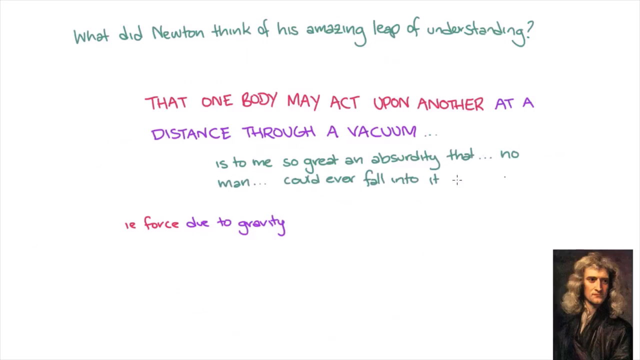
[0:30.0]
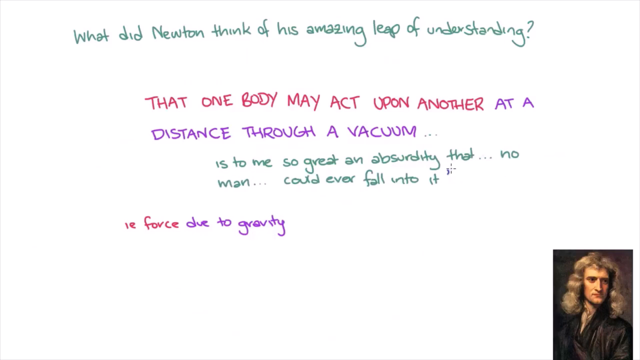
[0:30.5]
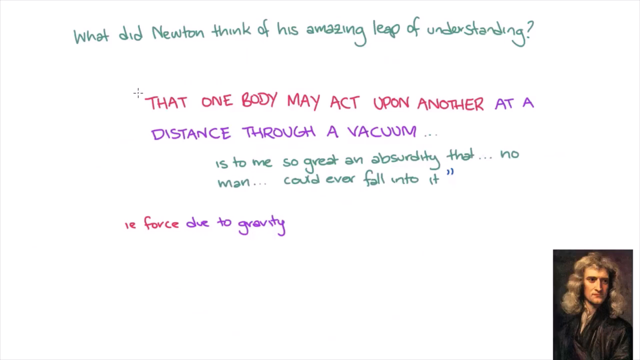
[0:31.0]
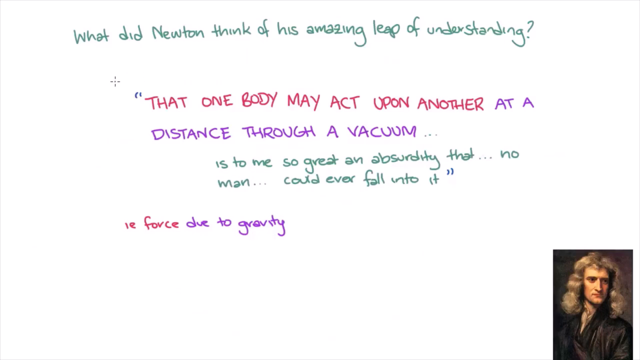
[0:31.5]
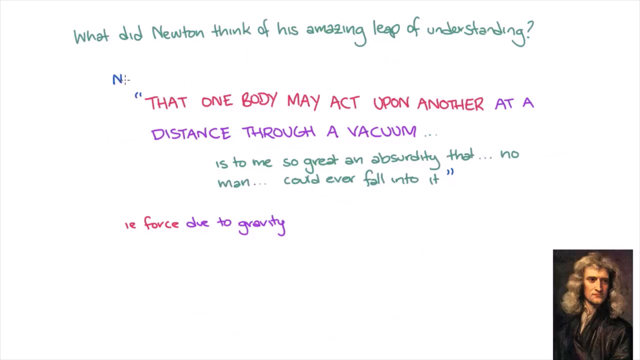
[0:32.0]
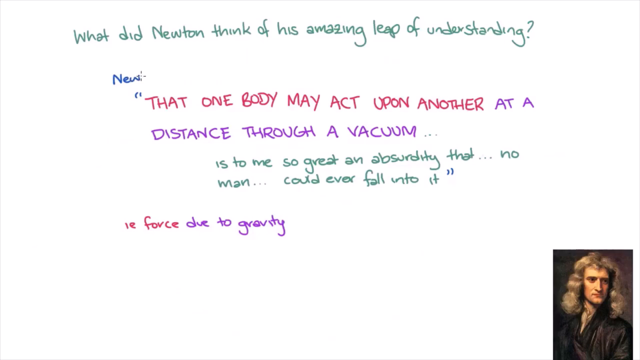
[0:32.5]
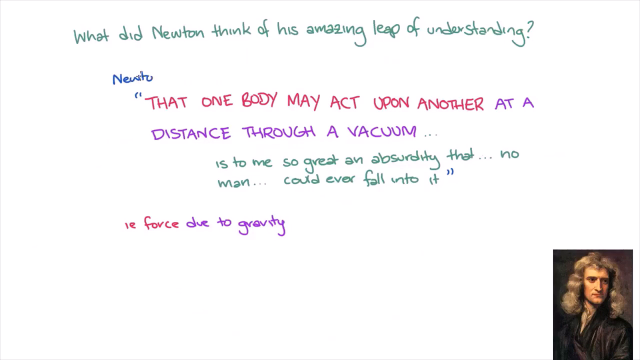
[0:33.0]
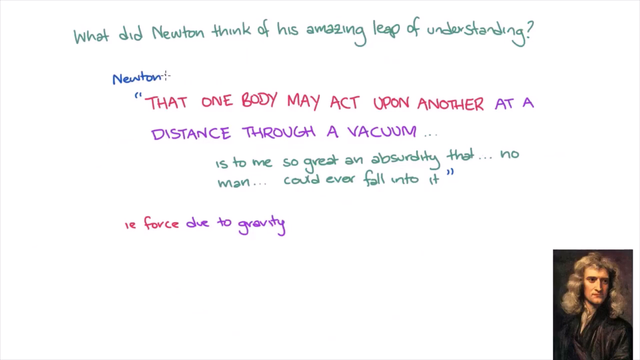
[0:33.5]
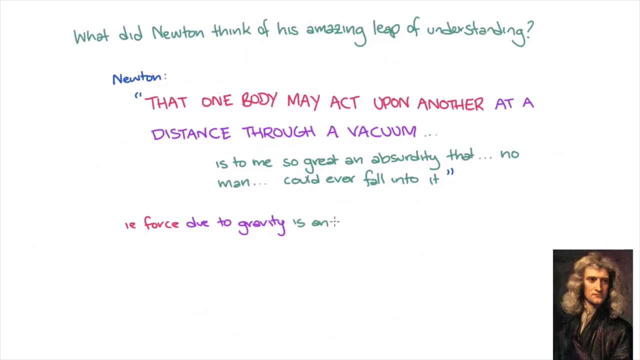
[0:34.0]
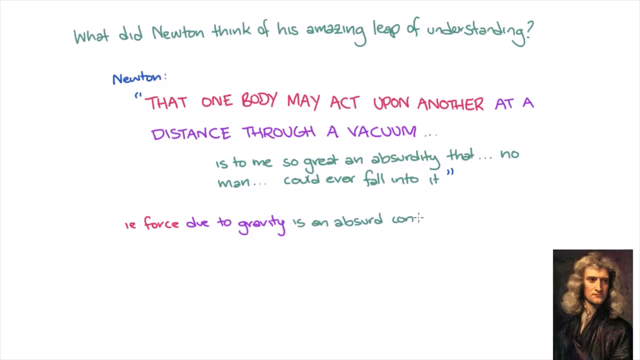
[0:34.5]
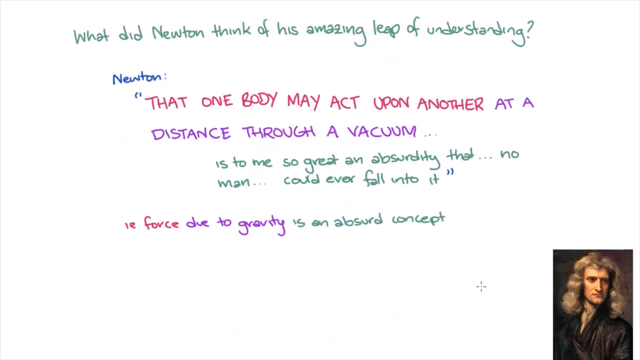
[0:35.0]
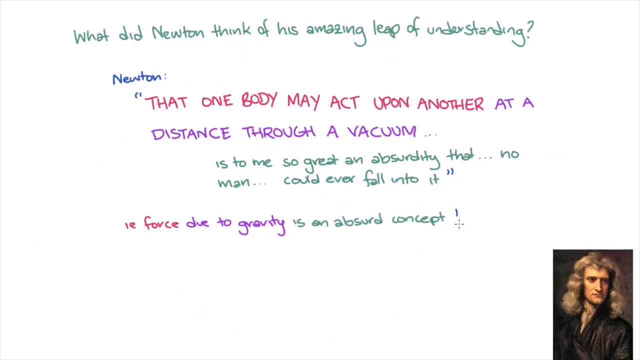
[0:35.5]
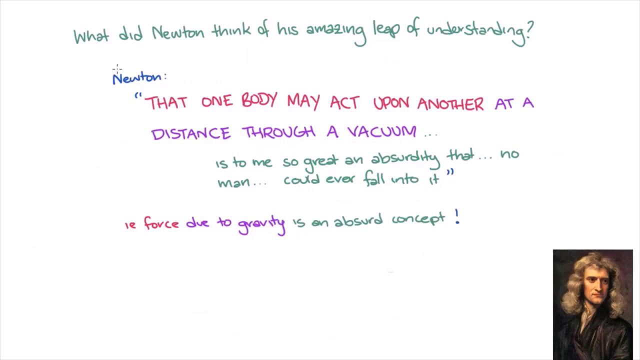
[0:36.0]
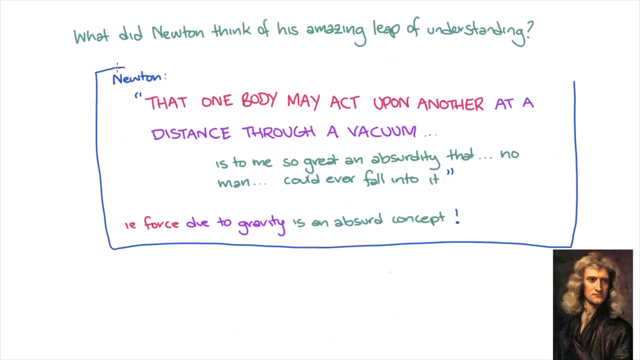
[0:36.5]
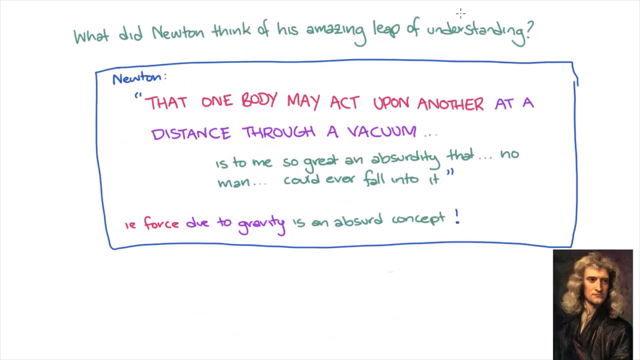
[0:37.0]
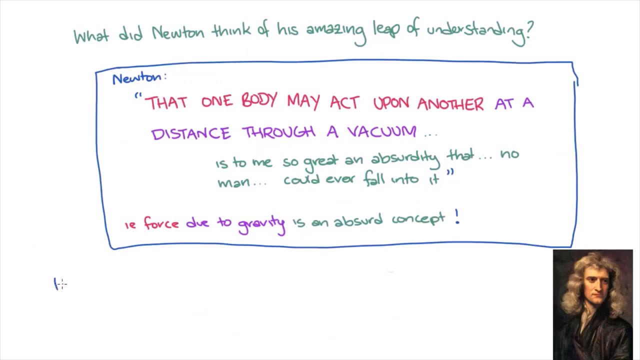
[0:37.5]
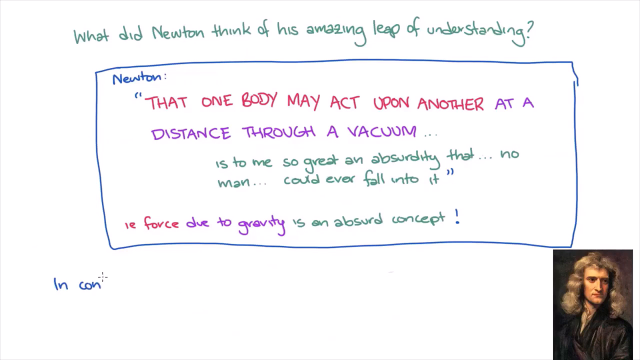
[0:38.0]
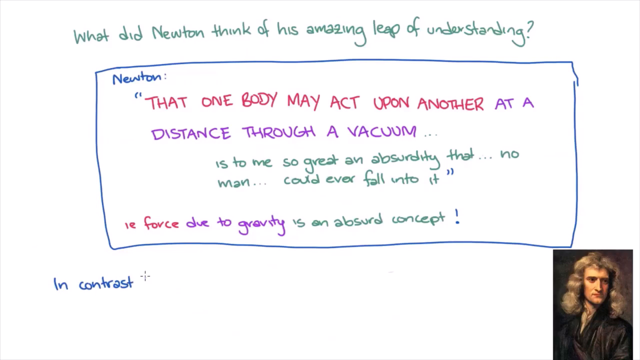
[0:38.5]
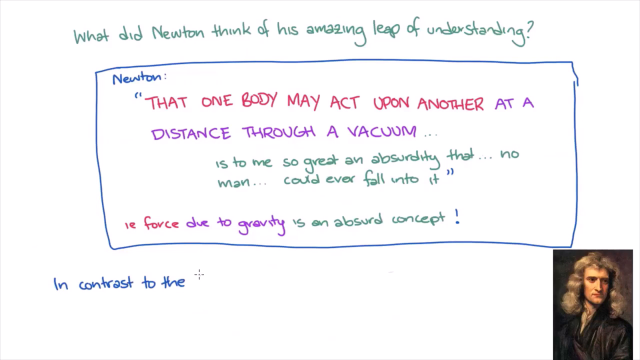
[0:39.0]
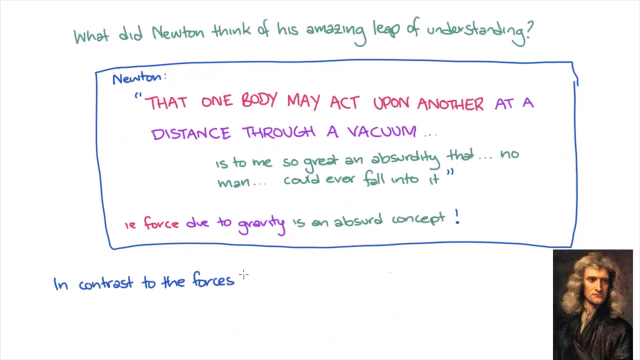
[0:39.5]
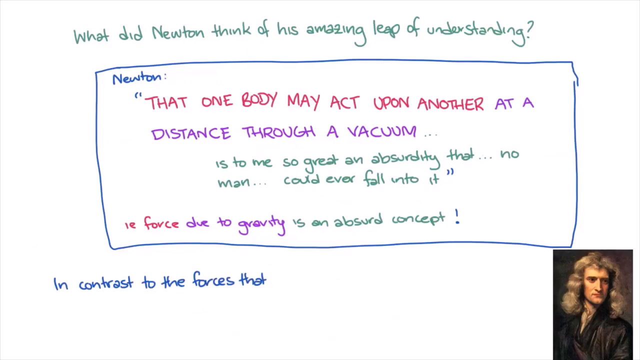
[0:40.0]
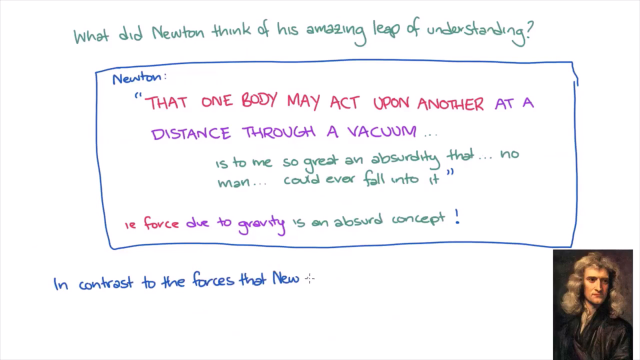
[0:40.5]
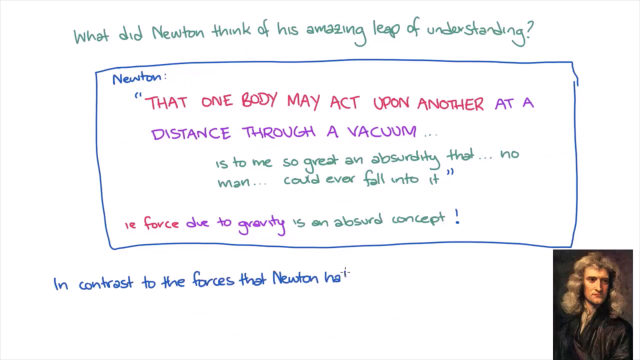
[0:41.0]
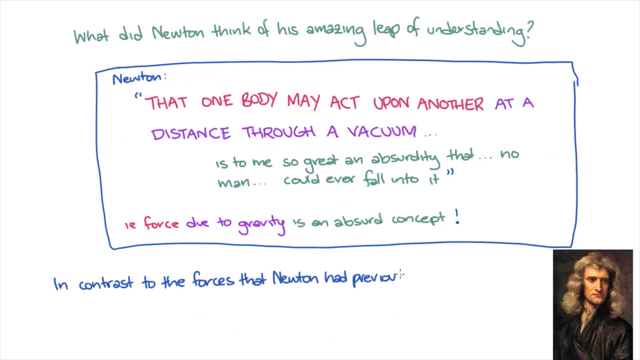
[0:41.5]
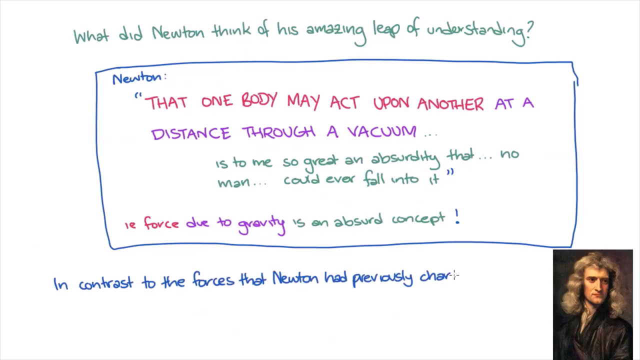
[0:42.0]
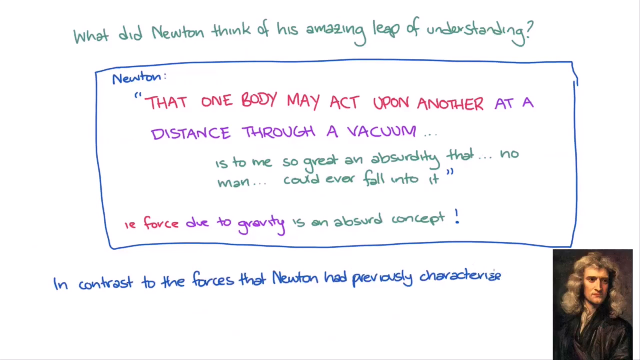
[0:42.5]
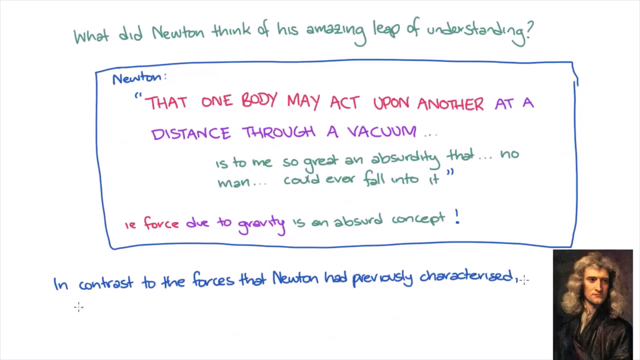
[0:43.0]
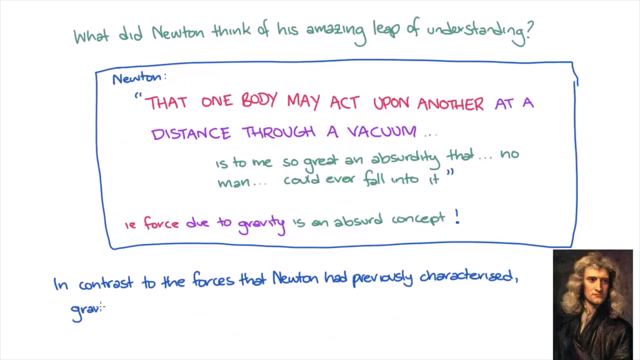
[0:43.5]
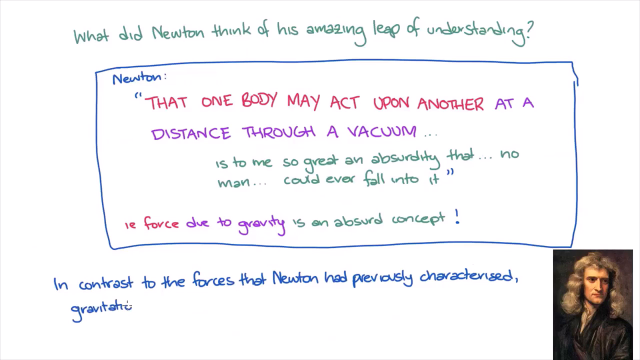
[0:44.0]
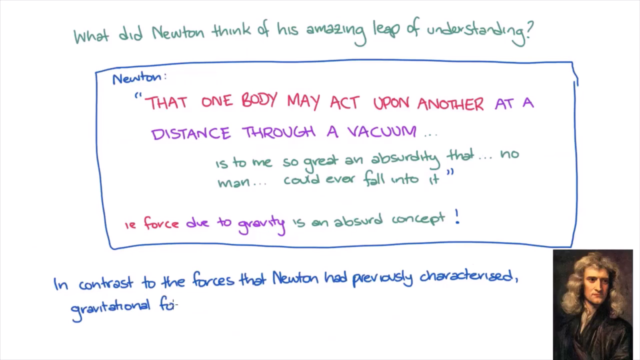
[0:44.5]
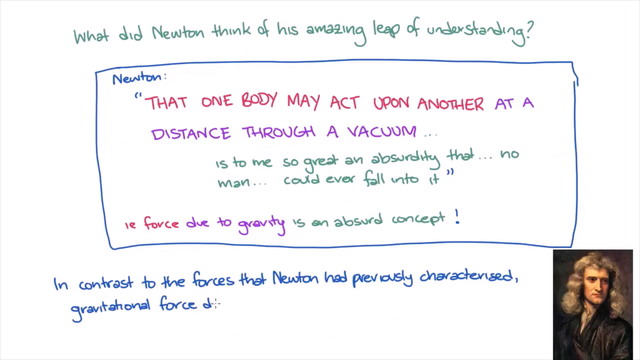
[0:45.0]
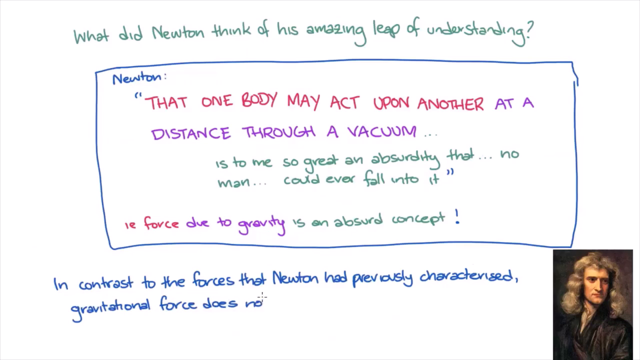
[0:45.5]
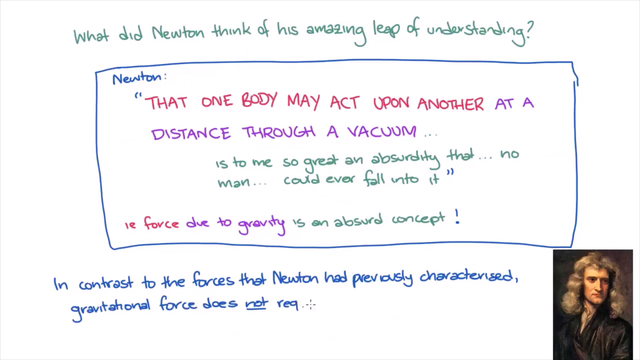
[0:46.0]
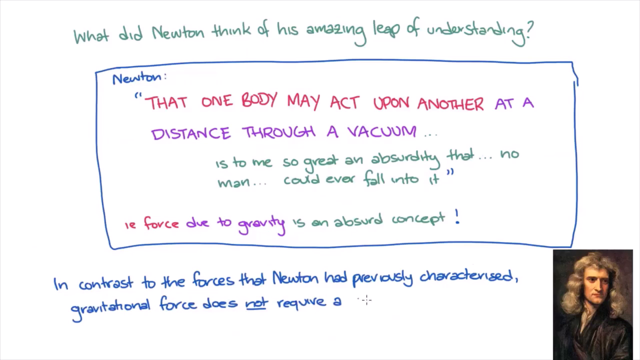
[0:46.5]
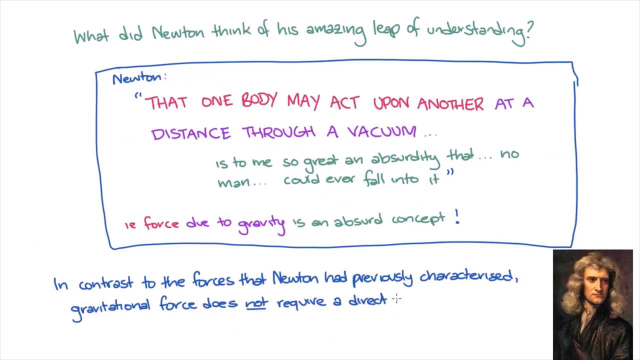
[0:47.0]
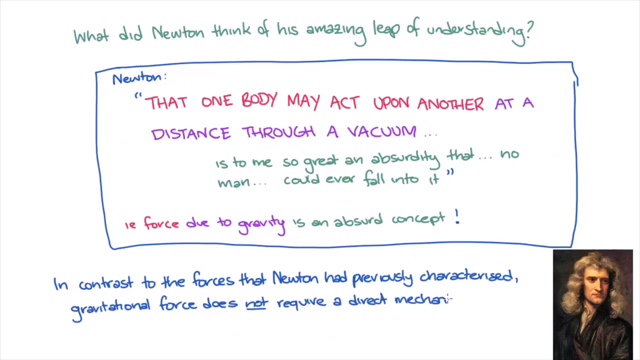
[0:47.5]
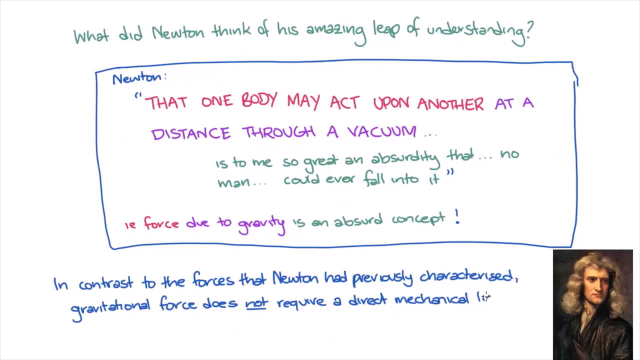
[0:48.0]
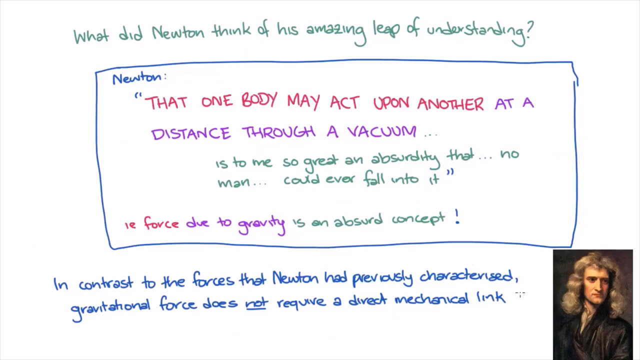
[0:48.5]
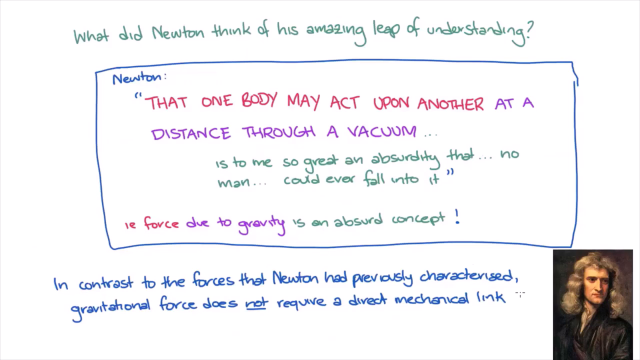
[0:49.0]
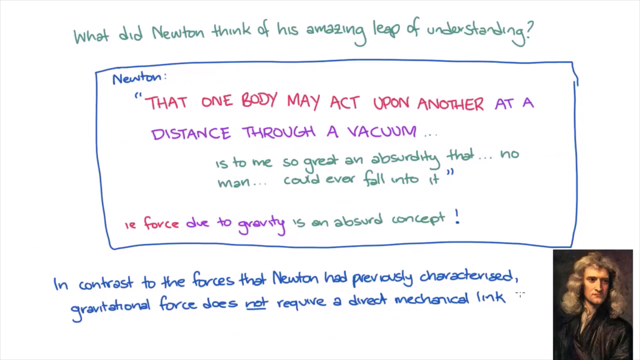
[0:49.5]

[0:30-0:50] New text is added to the same white screen. The name "Newton" appears in blue text, and quotation marks now surround the text written earlier, outlined in blue. Below, new text says "in contrast to the forces that Newton had previously characterized, gravitational force does not require a direct mechanical link," all written in blue toward the bottom of the screen. Nothing else changes apart from the added text: the same picture remains in the bottom right corner and the background stays the same. Judging by the text, the video appears to be about Isaac Newton, his philosophy and quotes attributed to him.